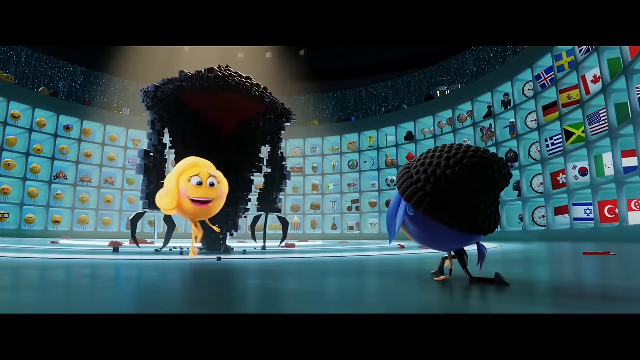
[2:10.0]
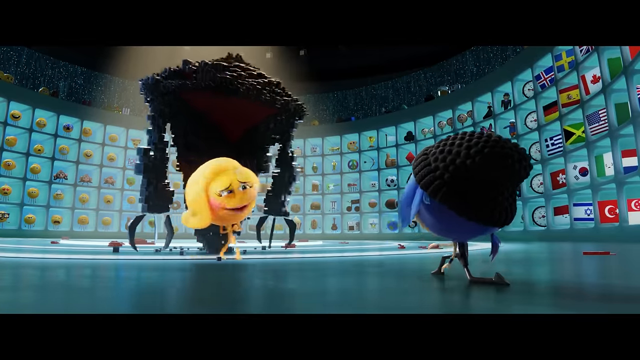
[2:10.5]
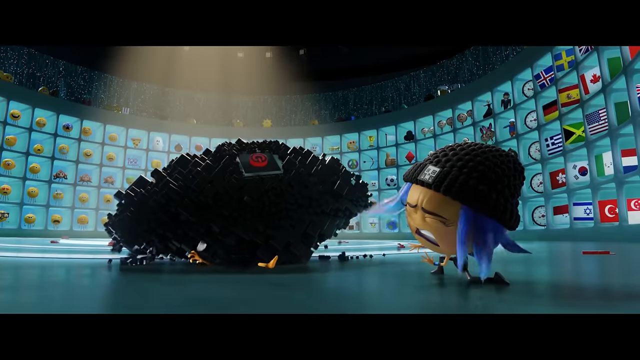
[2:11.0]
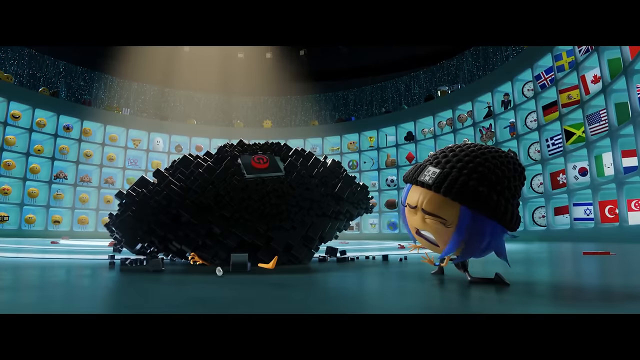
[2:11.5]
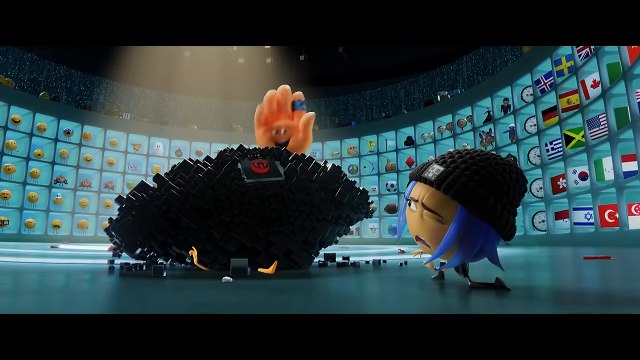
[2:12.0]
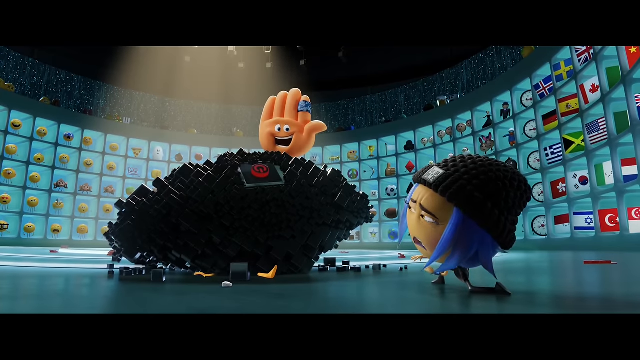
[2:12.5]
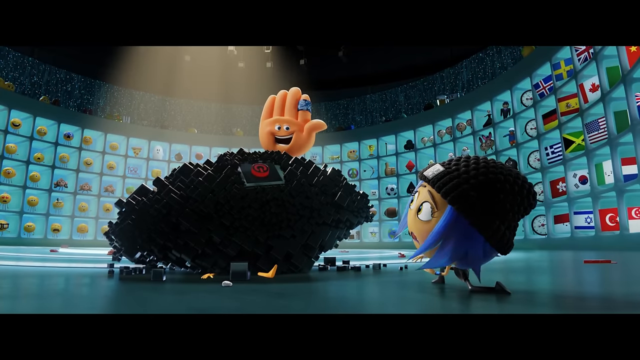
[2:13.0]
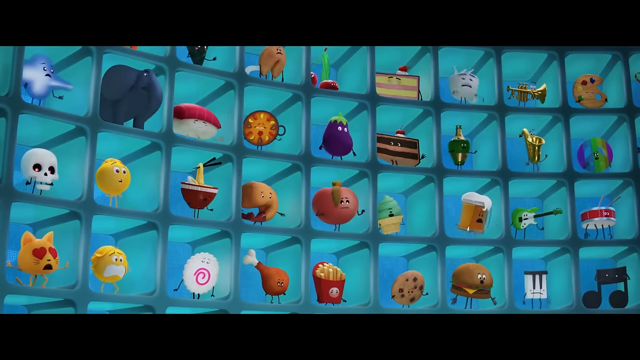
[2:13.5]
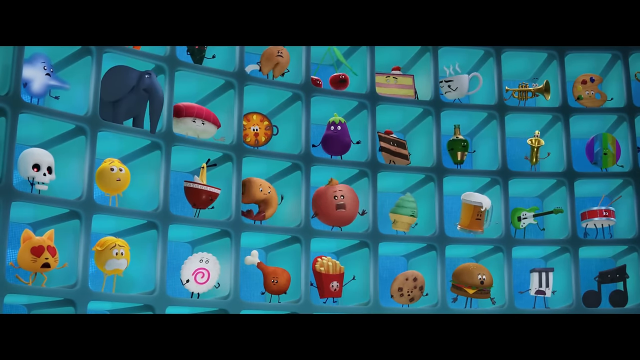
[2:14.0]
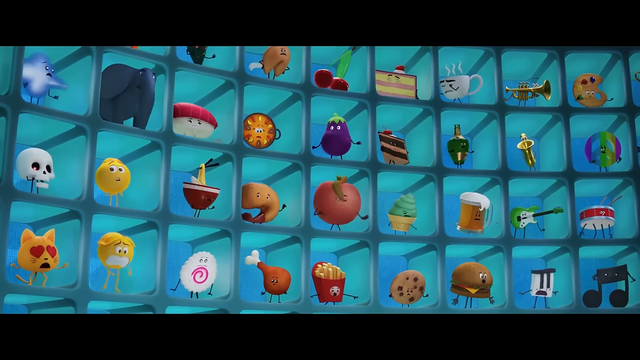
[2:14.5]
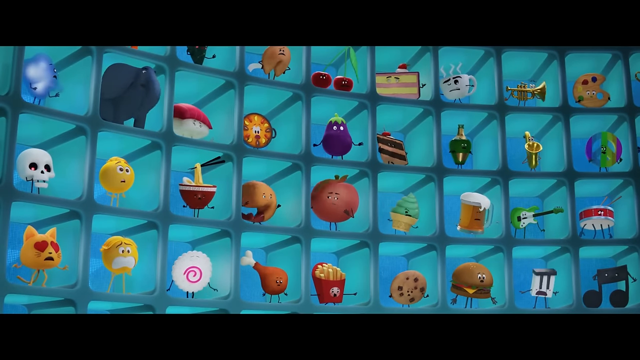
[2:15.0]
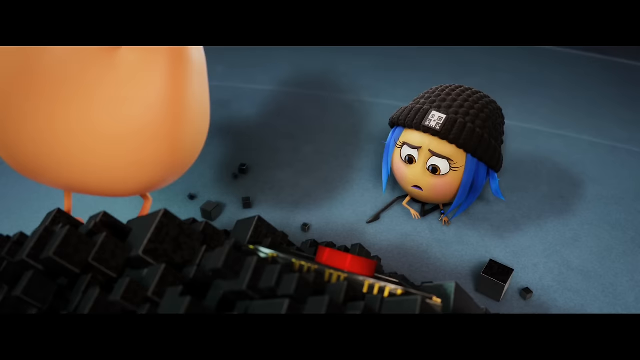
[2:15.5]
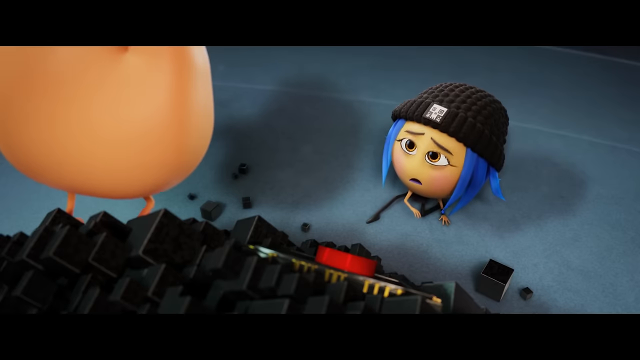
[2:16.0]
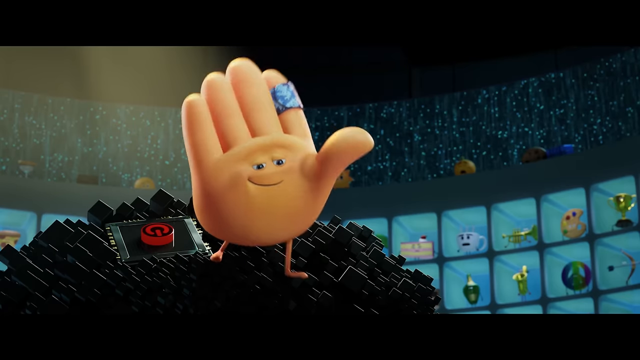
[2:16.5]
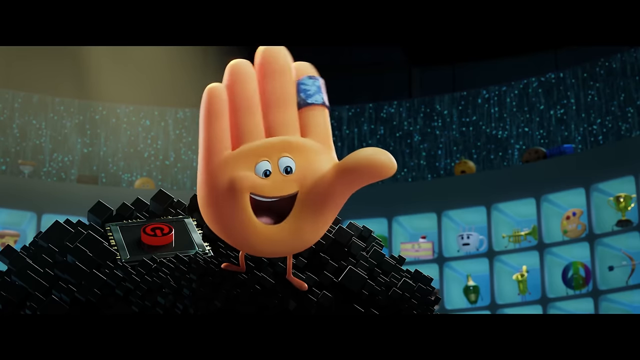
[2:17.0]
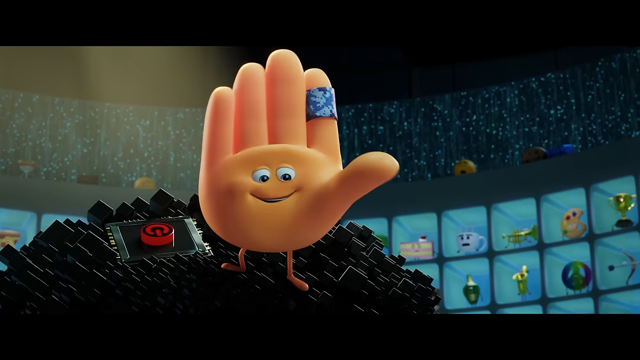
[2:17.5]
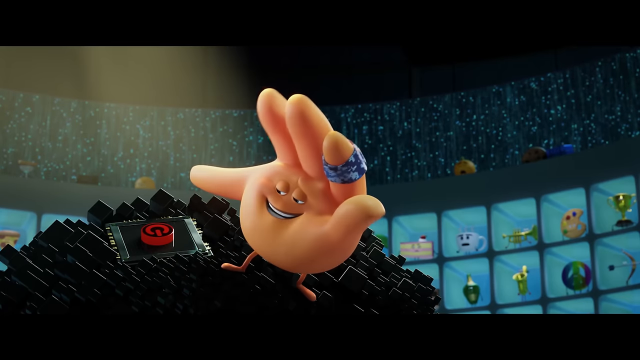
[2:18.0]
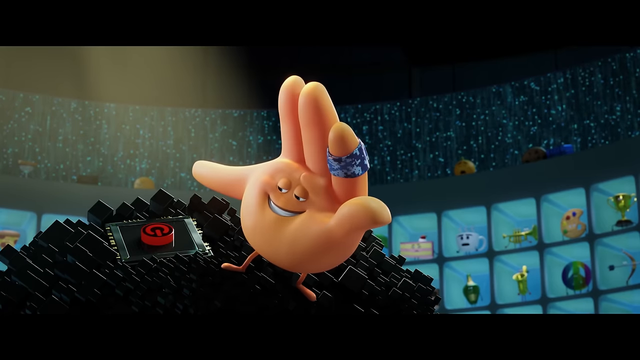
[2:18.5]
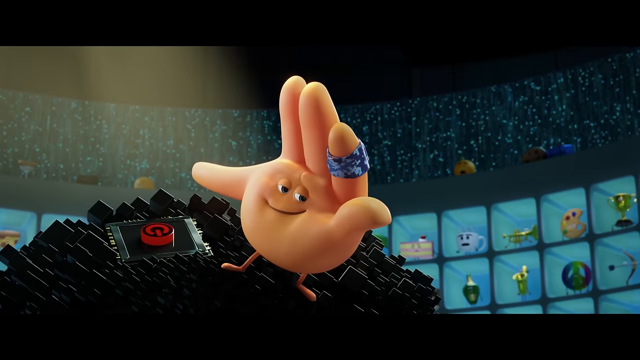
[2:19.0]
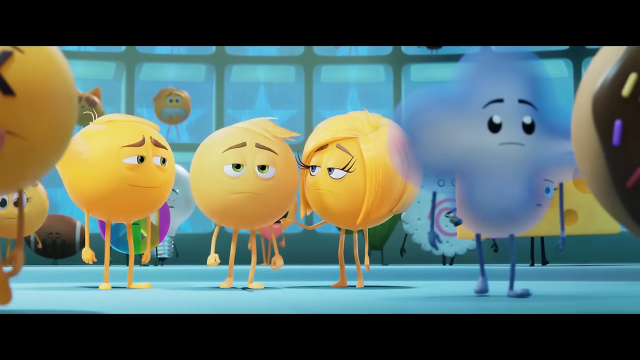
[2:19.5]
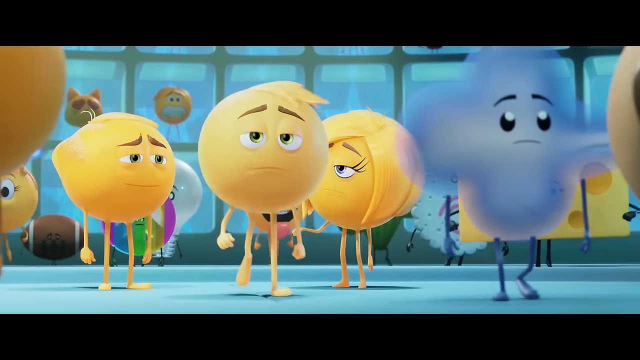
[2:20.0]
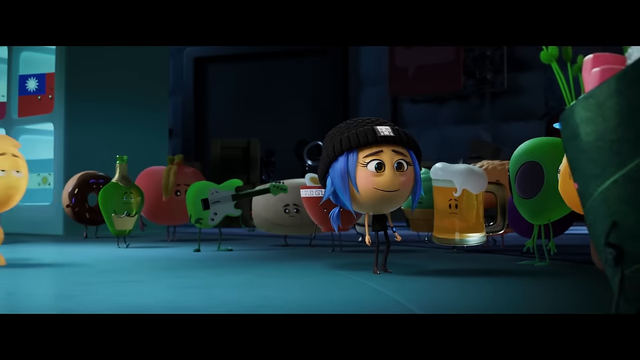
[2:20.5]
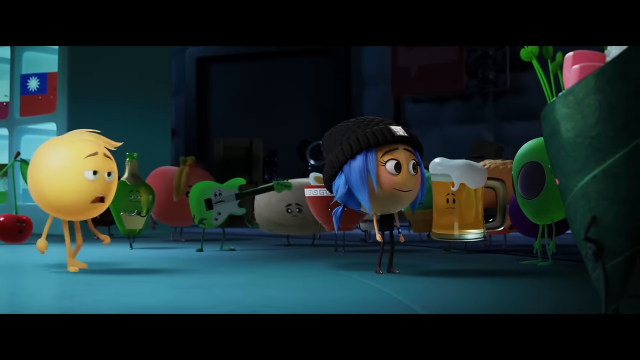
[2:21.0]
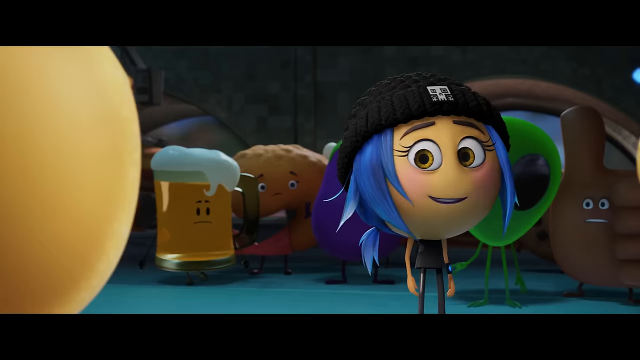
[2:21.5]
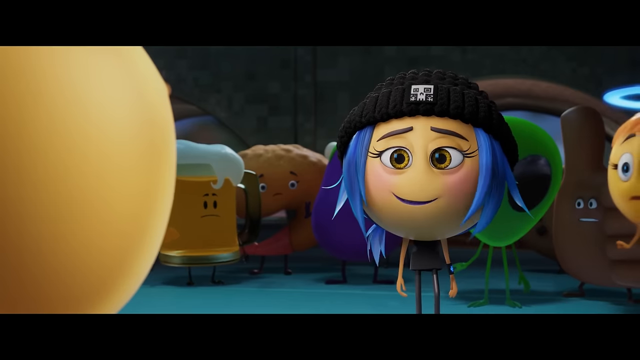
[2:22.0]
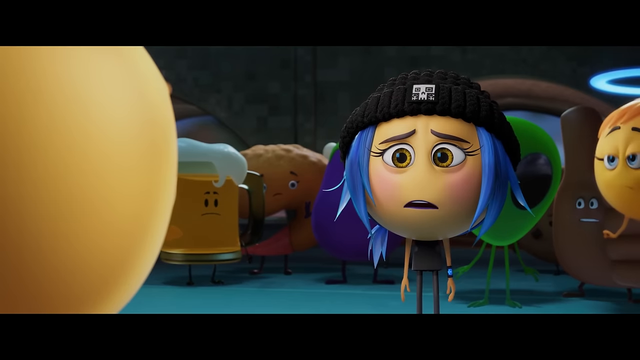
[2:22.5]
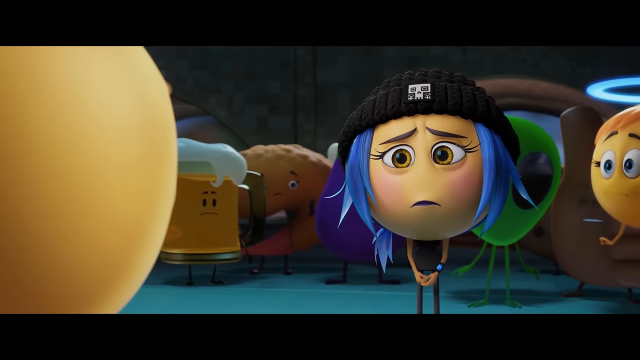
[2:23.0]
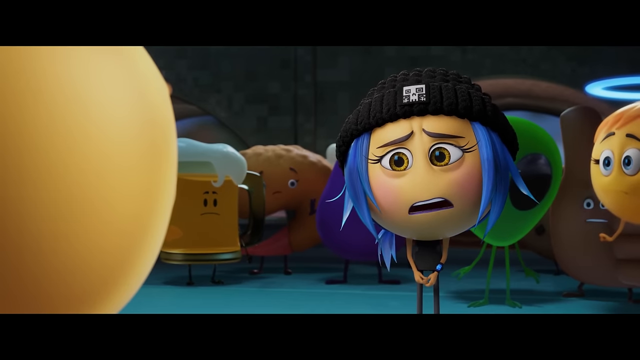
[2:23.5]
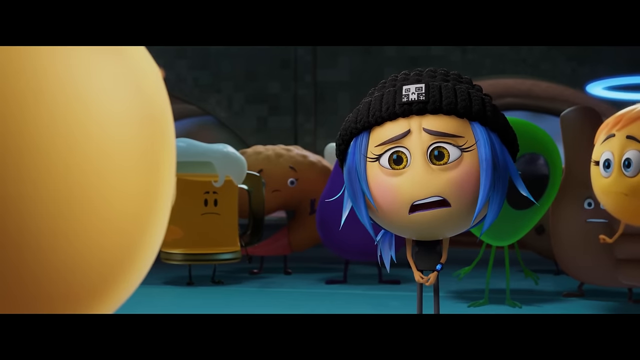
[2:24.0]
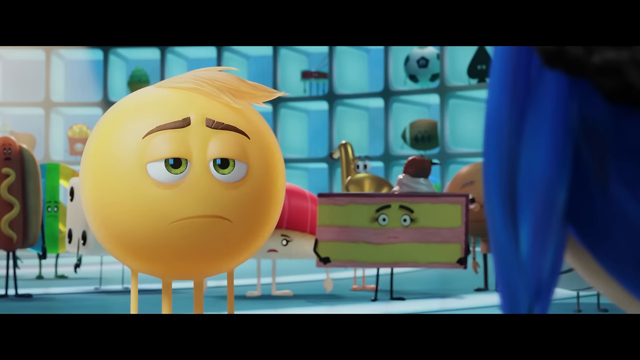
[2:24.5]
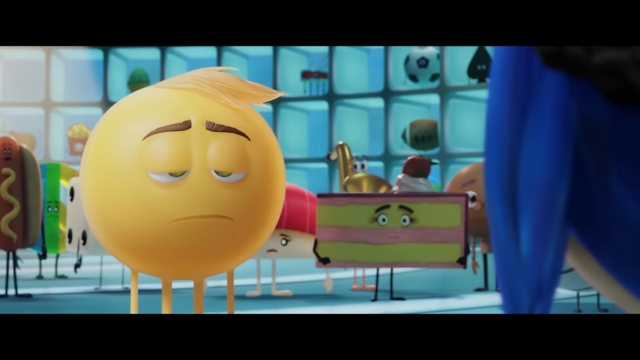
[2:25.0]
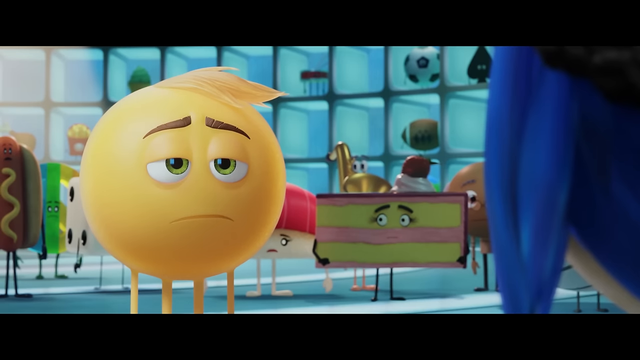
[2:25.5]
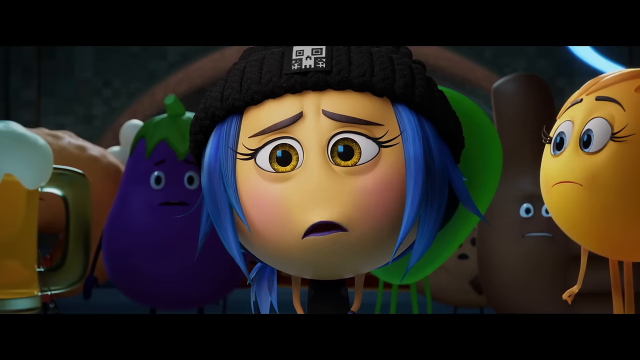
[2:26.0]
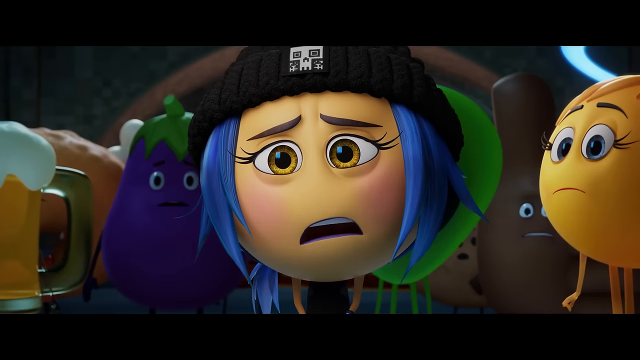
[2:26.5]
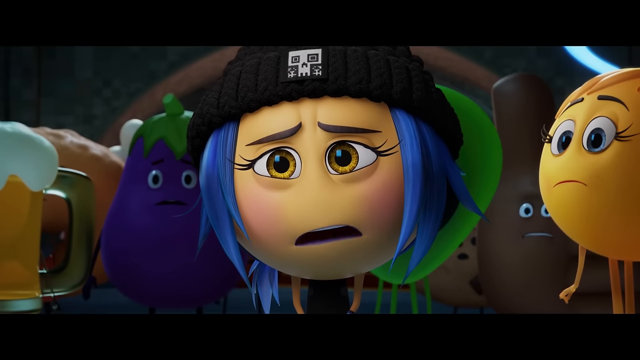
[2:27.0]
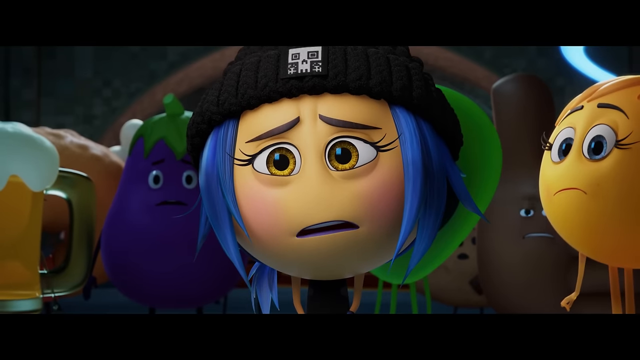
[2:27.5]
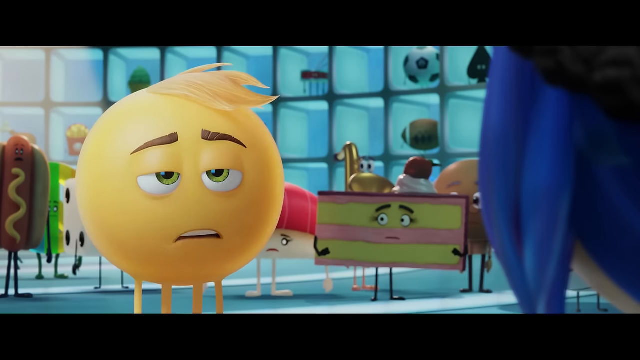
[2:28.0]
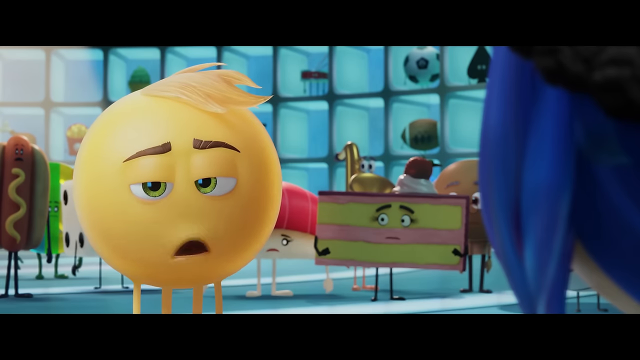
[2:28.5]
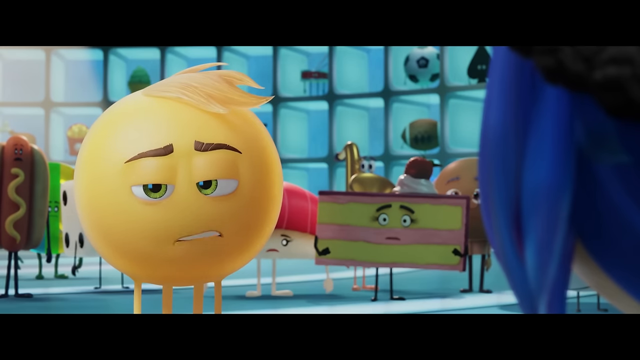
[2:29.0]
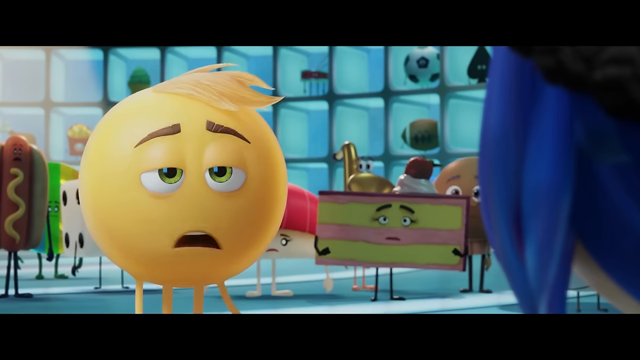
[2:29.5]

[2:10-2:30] Jailbreak has fallen down on her knee, and Smiler approaches her while talking. The robot monster then falls onto Smiler. High Five is shown as the one who pressed the button to switch off the robot. Jailbreak tried to hack the robot's system and the switch off button popped up, but she was swept onto the floor; the robot turned its focus to her, and High Five pressed the switch and turned off the robot. Jailbreak and Gene Meh then have a conversation, and Jailbreak appears to be saying something, judging by her facial expressions. The other emojis are behind Jailbreak, watching the scene.